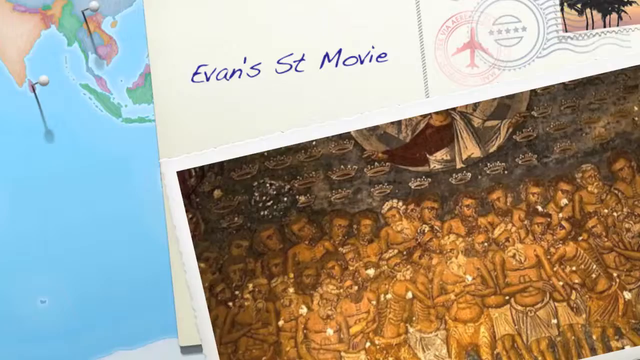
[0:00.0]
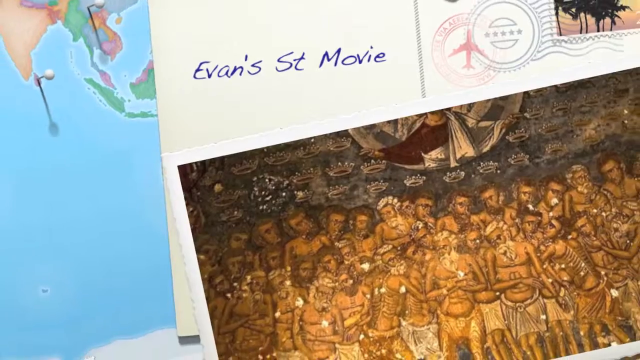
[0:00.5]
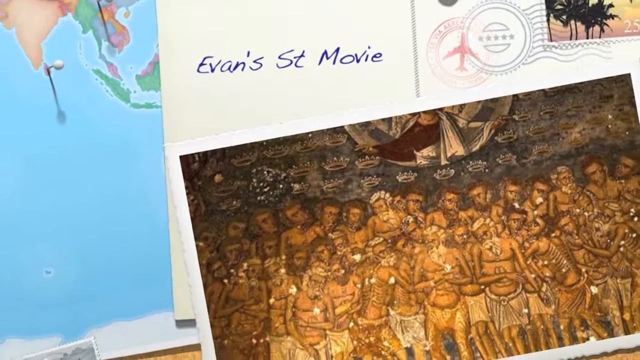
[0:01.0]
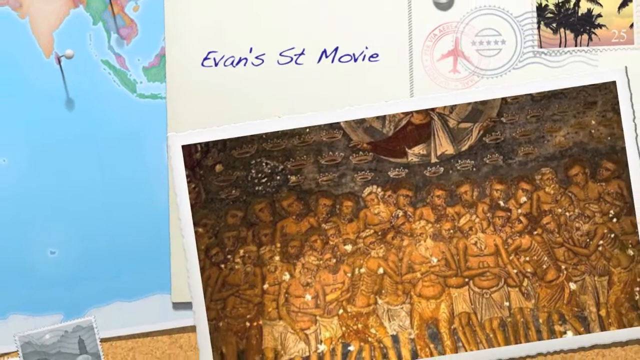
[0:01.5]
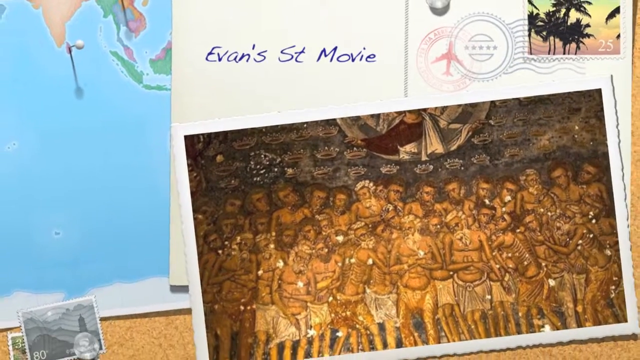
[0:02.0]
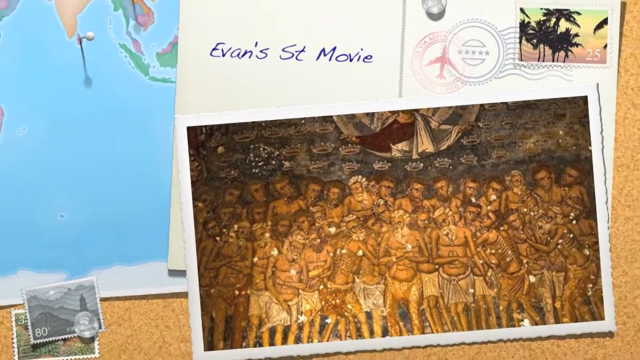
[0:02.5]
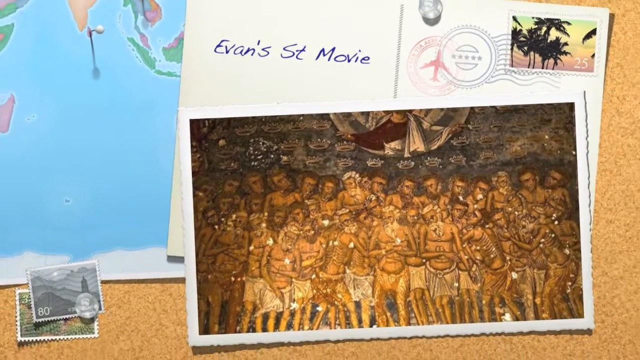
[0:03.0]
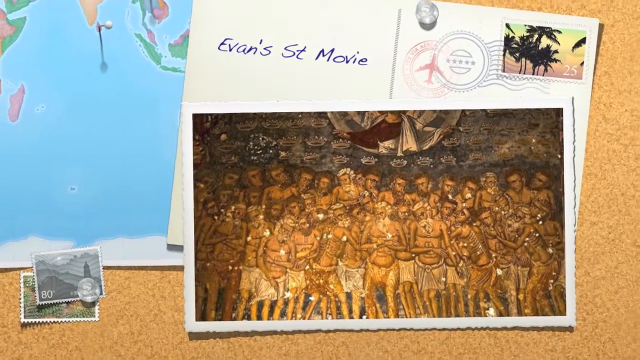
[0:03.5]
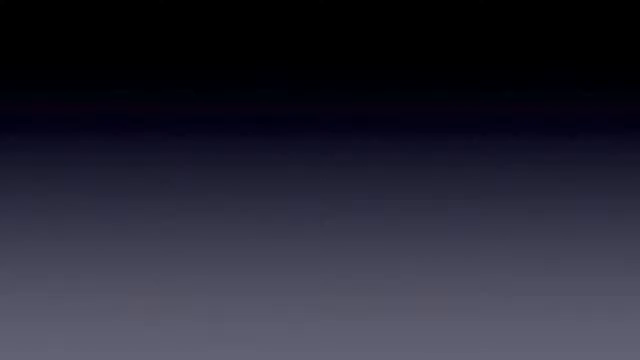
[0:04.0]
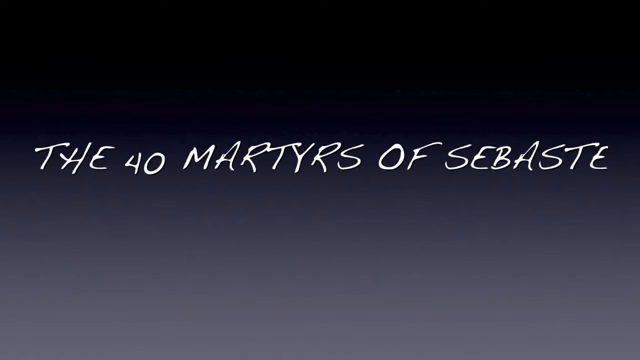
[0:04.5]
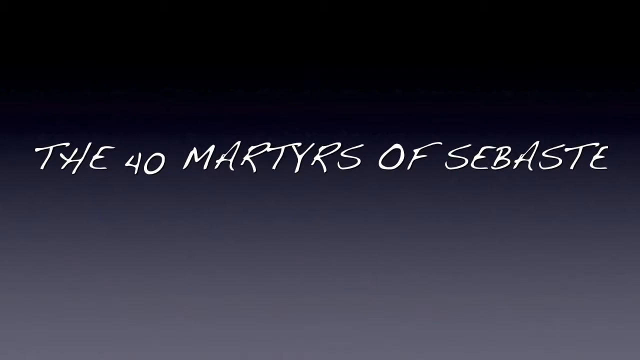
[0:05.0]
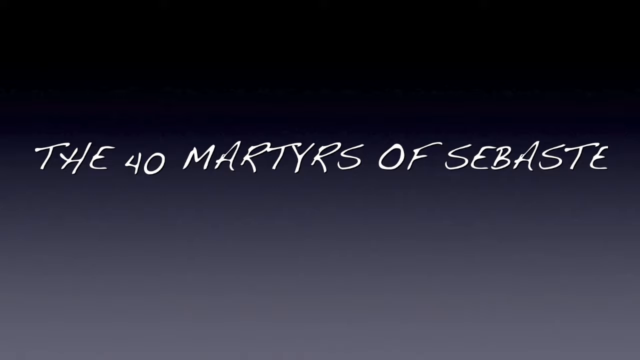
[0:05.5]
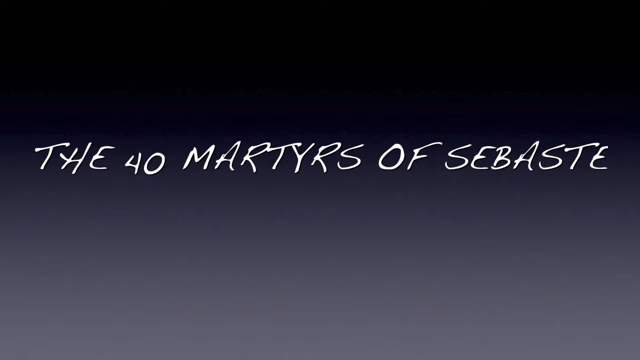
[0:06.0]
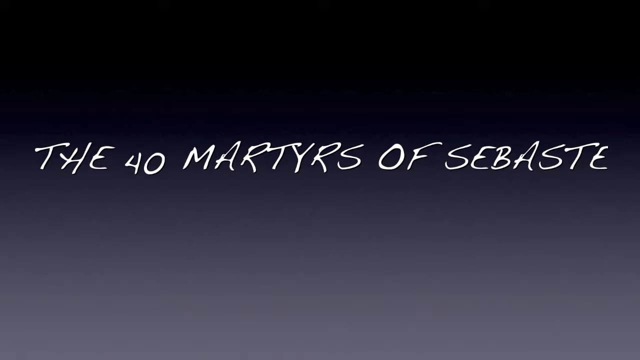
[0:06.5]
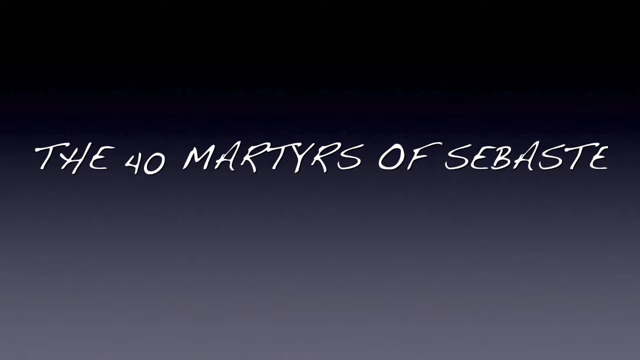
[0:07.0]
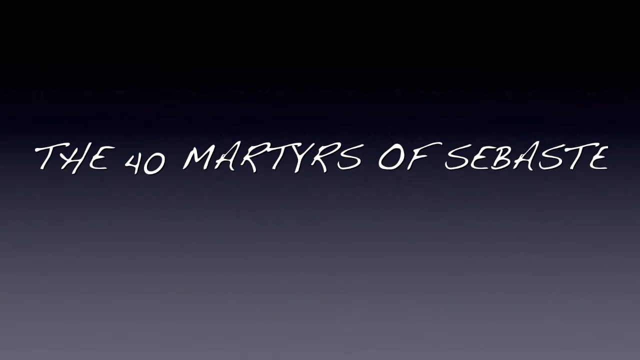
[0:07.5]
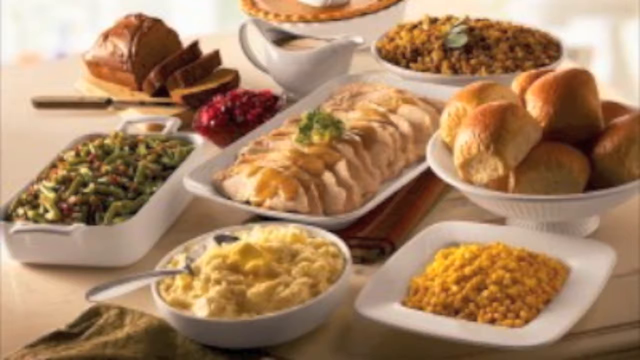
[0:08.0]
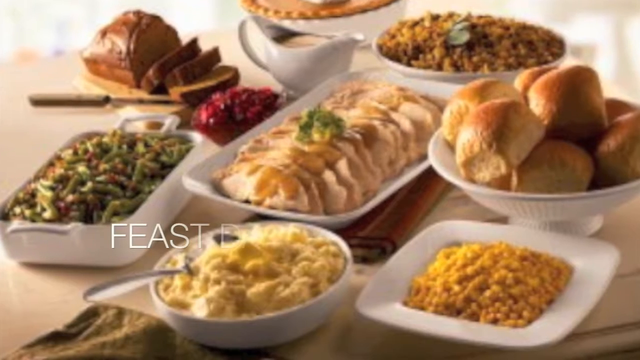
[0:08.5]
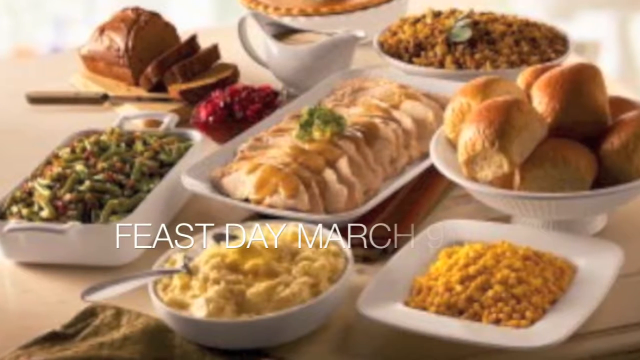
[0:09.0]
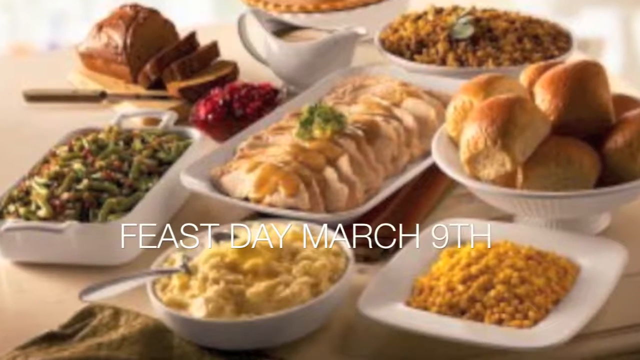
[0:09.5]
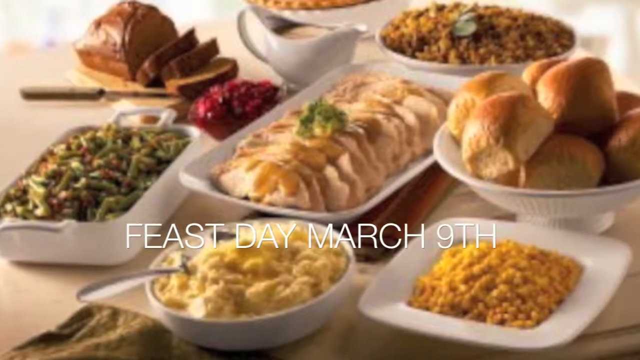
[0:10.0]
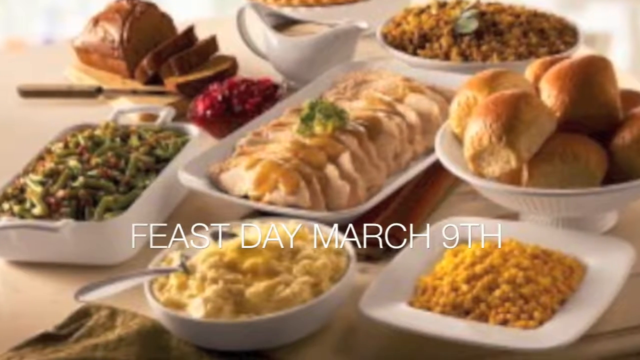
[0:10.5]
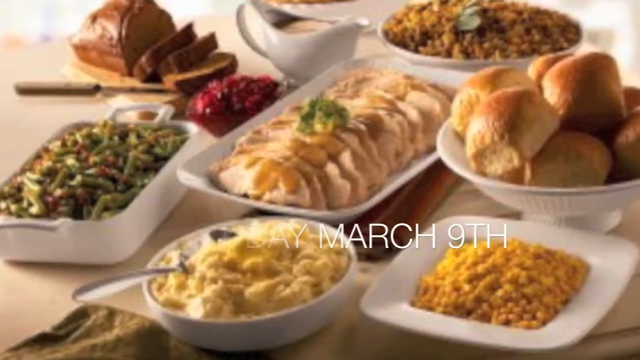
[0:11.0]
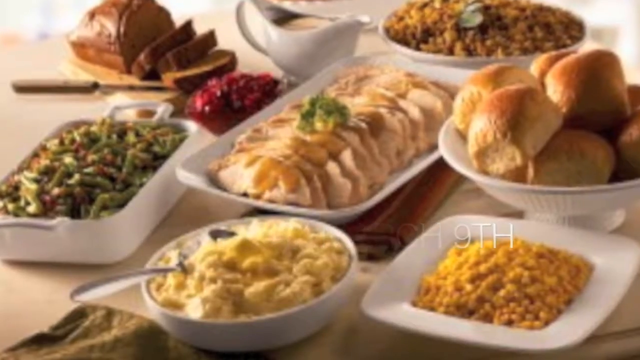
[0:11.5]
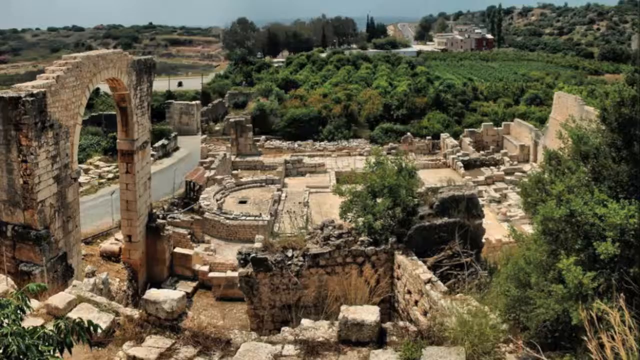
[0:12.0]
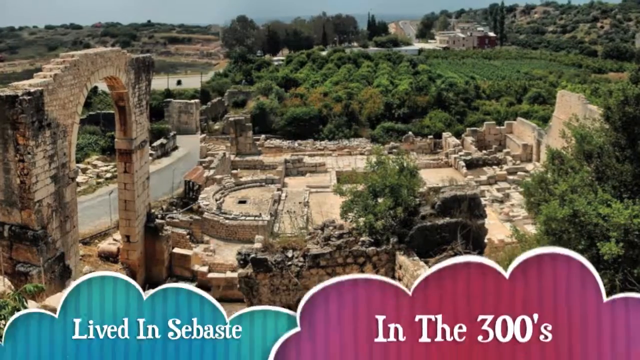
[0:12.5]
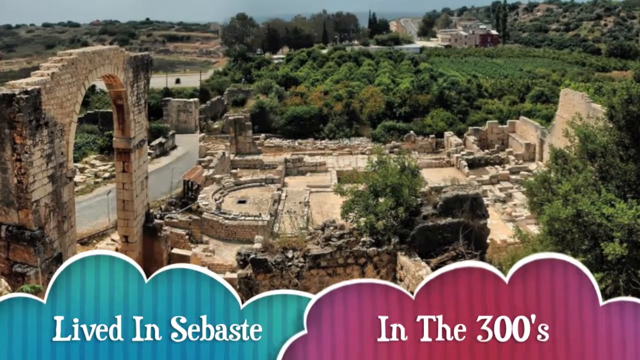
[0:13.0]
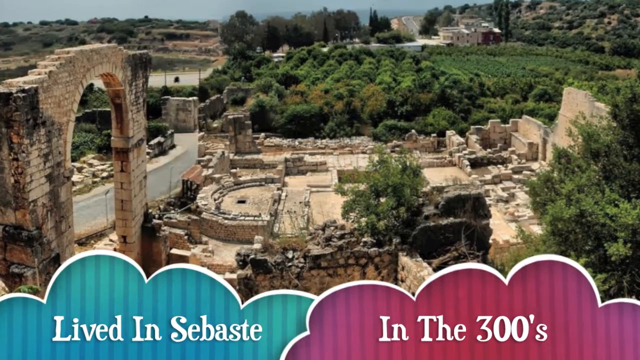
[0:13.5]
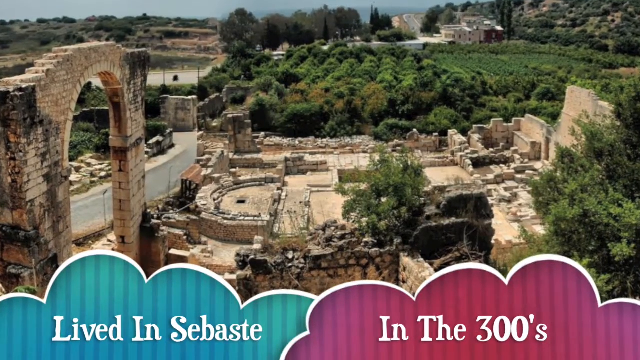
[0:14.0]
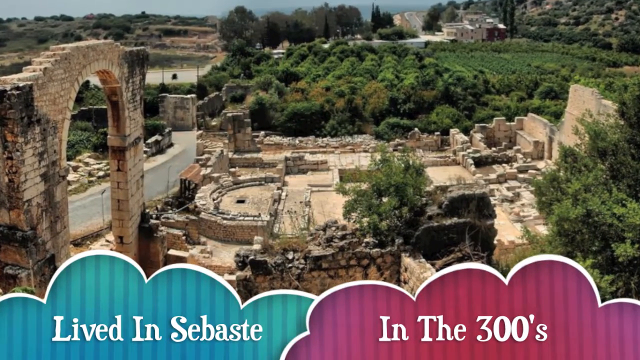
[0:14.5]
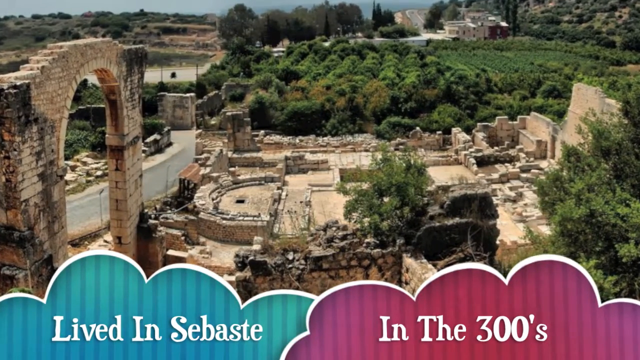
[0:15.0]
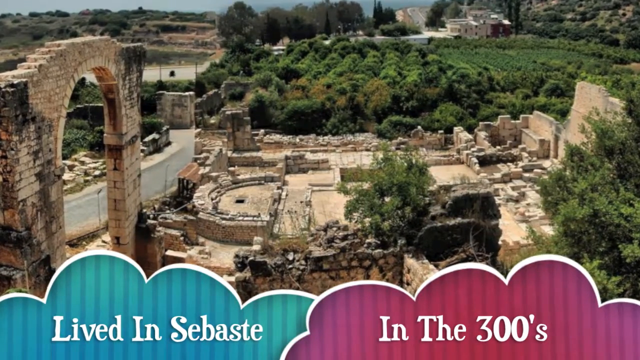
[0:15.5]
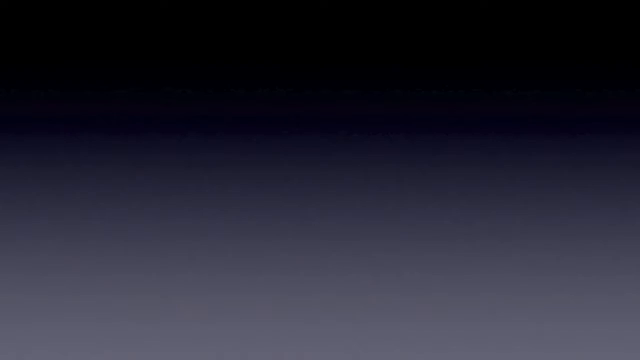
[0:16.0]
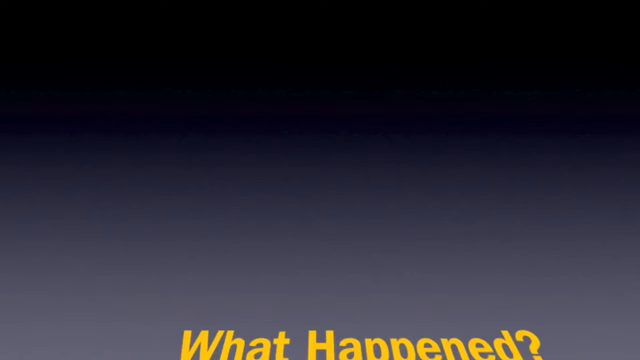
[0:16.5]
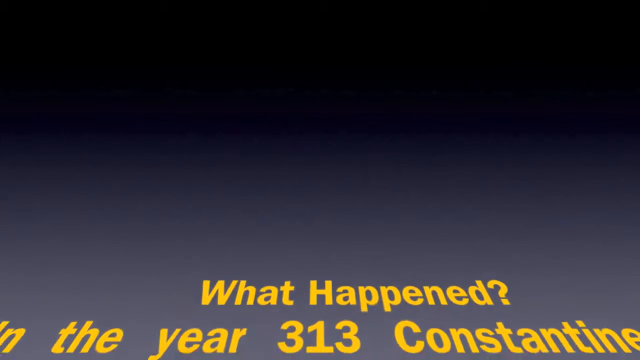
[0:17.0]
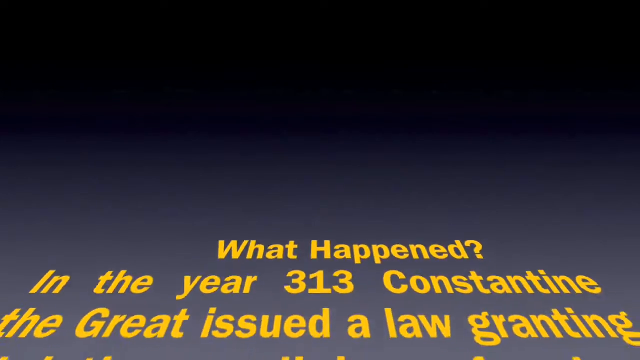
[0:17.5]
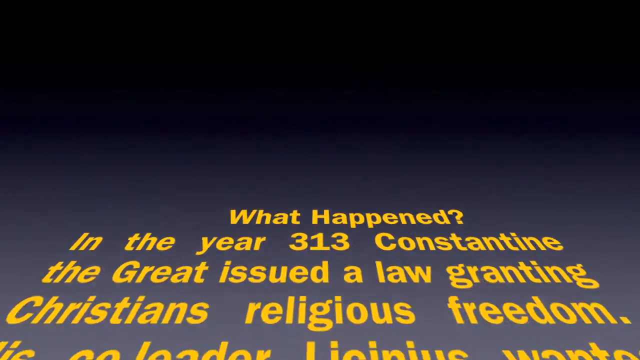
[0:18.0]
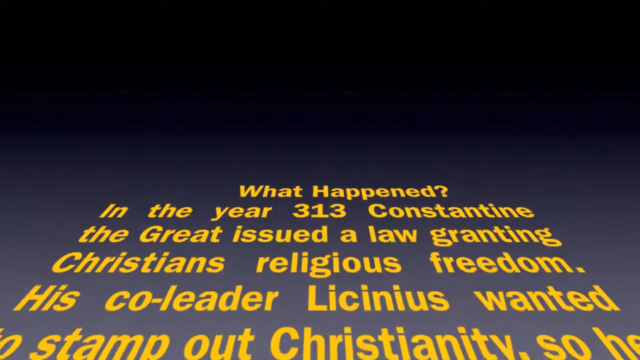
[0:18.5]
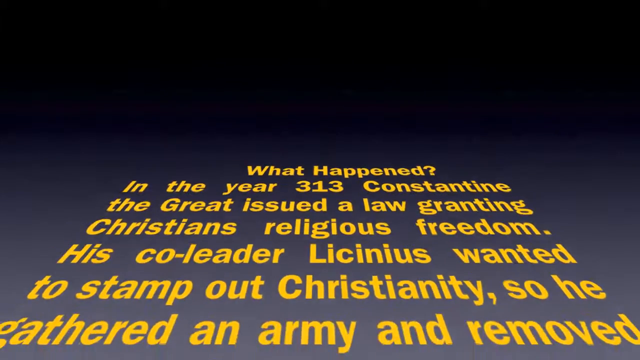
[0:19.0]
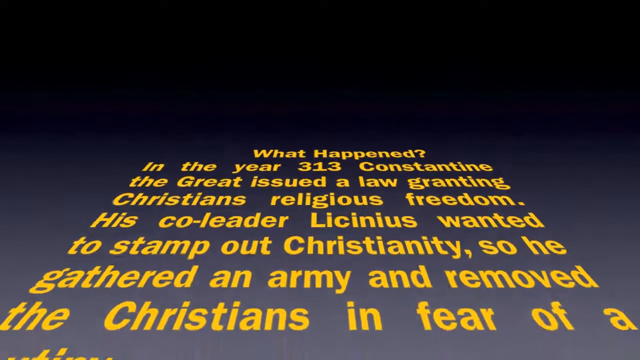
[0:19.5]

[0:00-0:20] On the right side is a picture that appears to be a drawing of a group of shirtless men, with some sort of religious figure depicted above them. Behind this picture is the back of a postcard that says "Evans St Movie." A caption in the middle reads "The 40 Martyrs of Sebaste." Next comes a spread of food: what looks like cut-up turkey, dinner rolls on the right side, a plate of corn, a bowl of mashed potatoes, sliced bread, stuffing, what looks like a pie at the top, some cranberries, and a small picture of gravy. A caption in the middle says "Feast Day March 9th." Then what looks like an ancient ruin of a temple or palace appears: many green trees in the distance, and in the middle a stone-like structure that used to be a large building, with an arch visible toward the left side. Many captions then come up from the bottom and move upward.